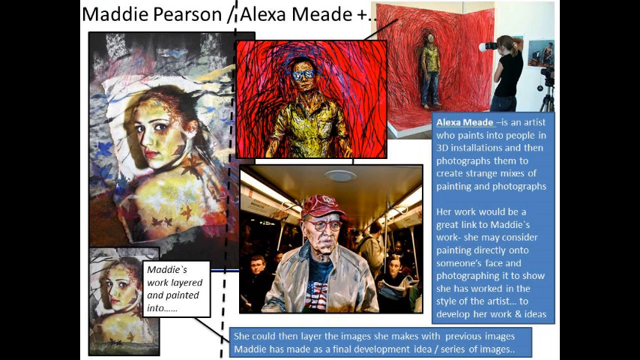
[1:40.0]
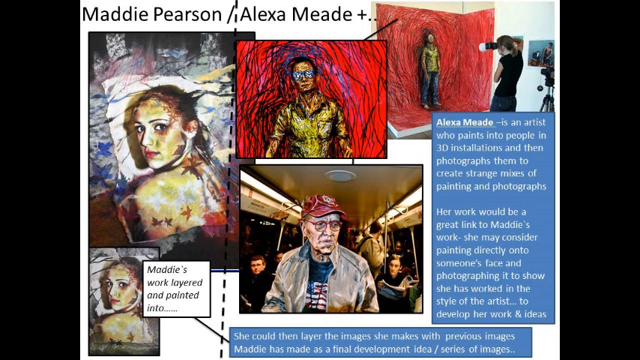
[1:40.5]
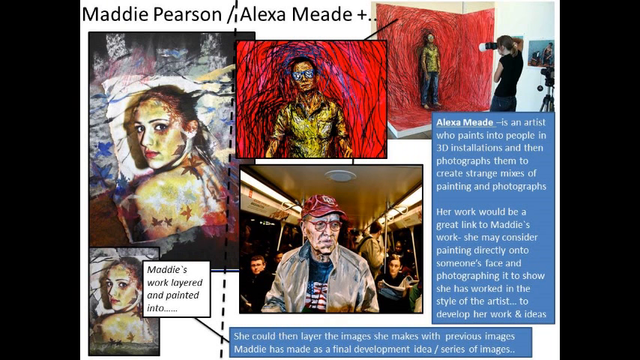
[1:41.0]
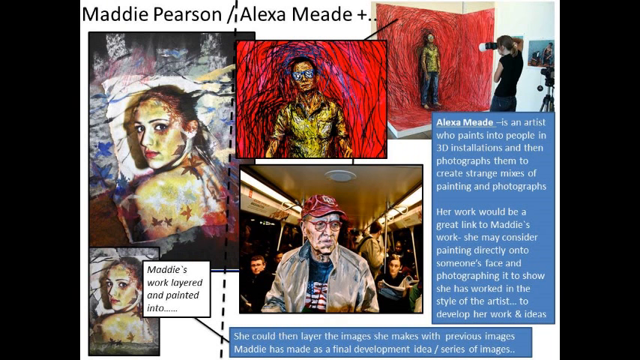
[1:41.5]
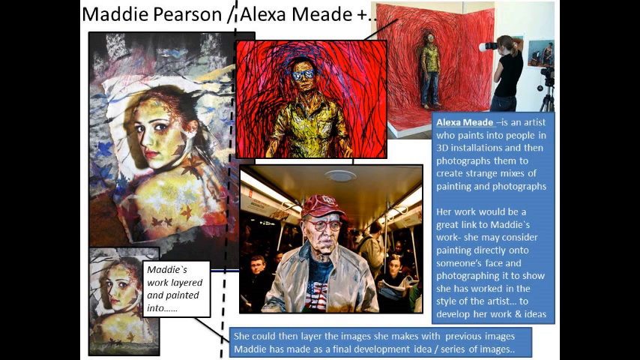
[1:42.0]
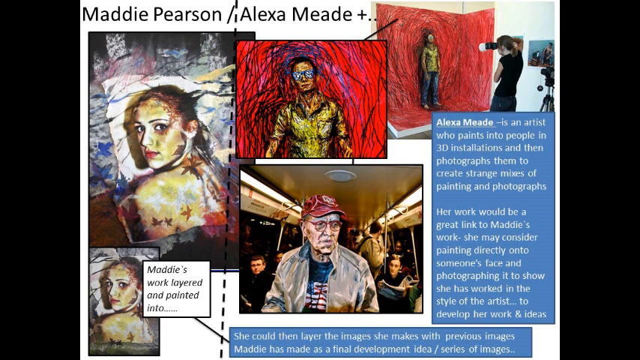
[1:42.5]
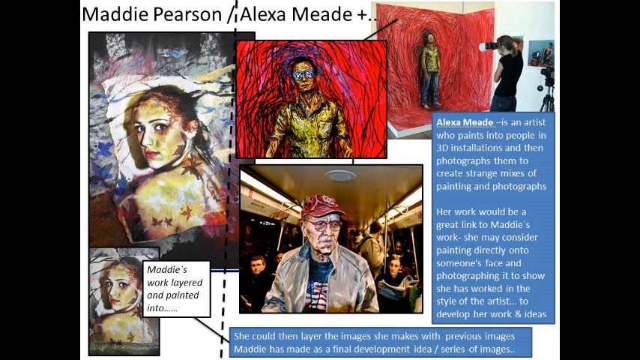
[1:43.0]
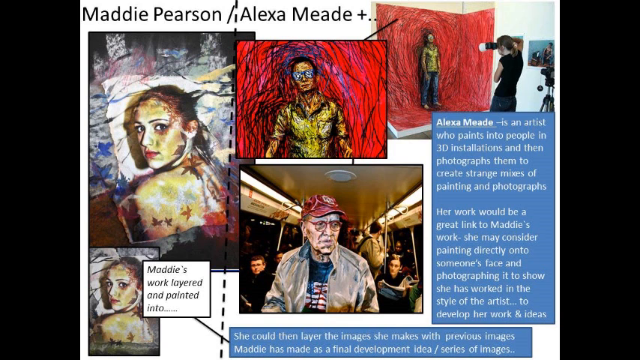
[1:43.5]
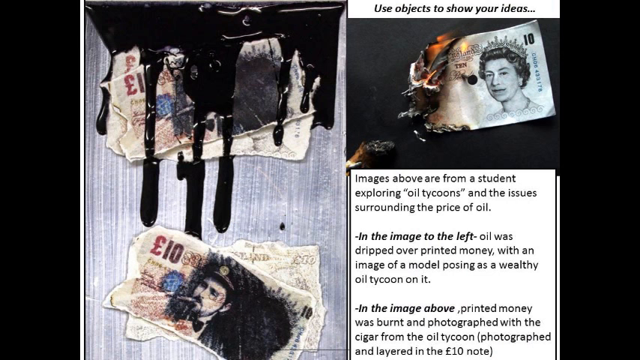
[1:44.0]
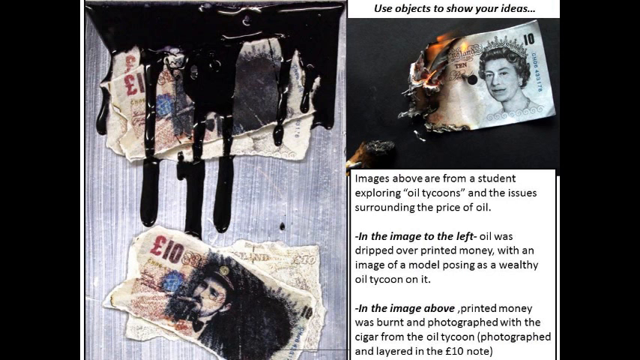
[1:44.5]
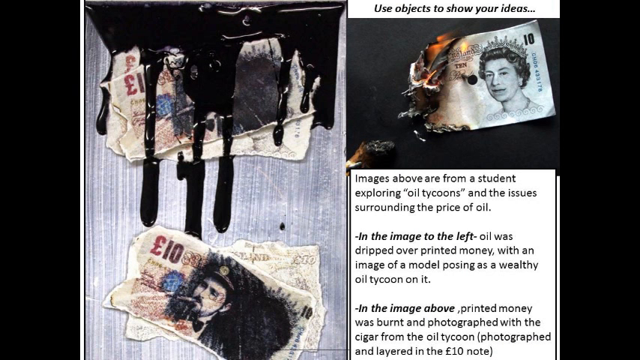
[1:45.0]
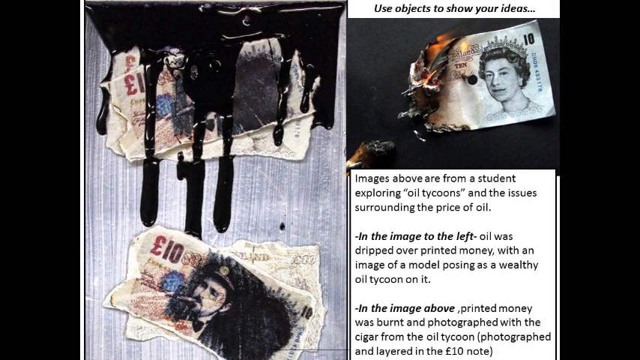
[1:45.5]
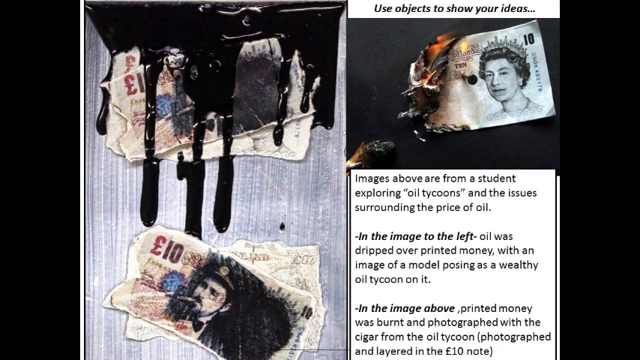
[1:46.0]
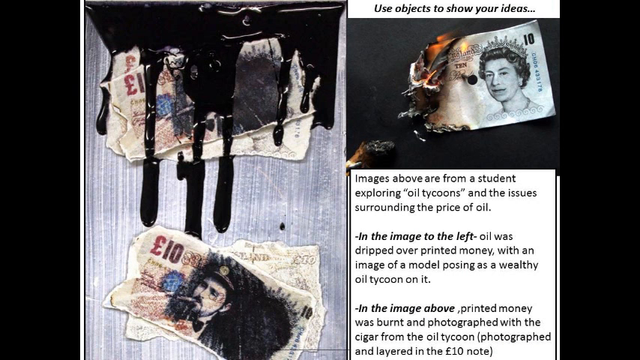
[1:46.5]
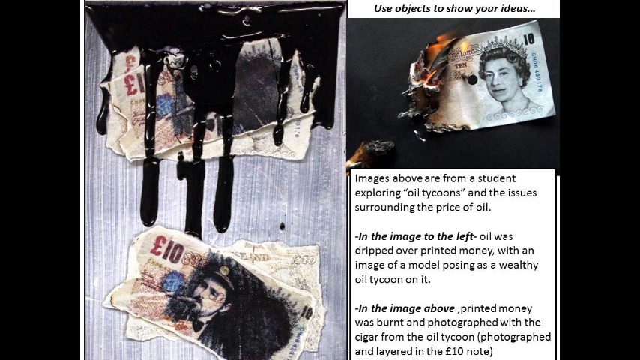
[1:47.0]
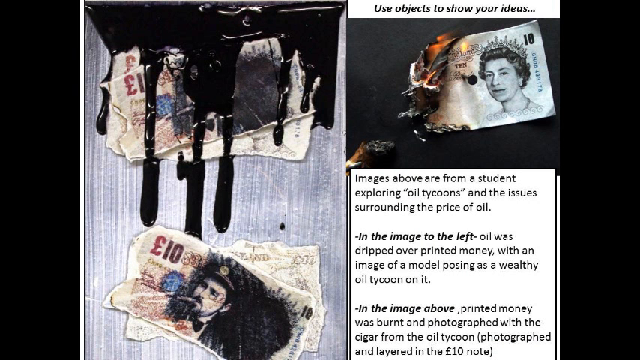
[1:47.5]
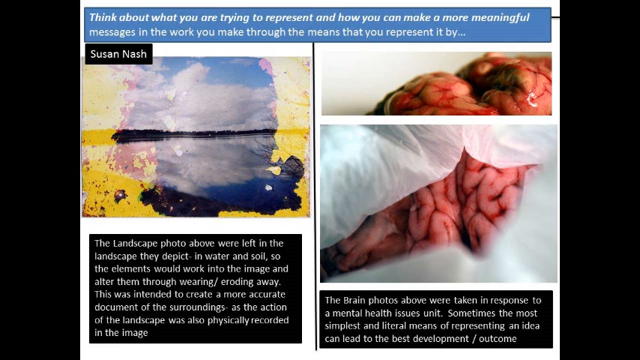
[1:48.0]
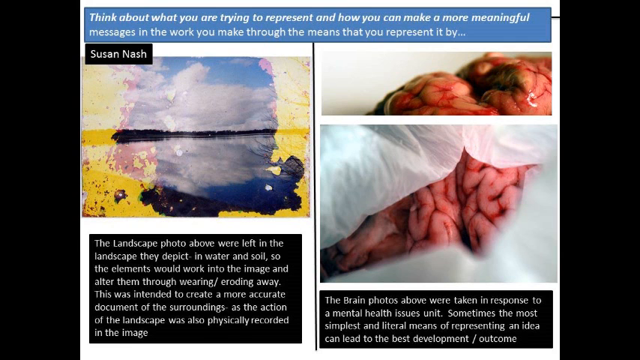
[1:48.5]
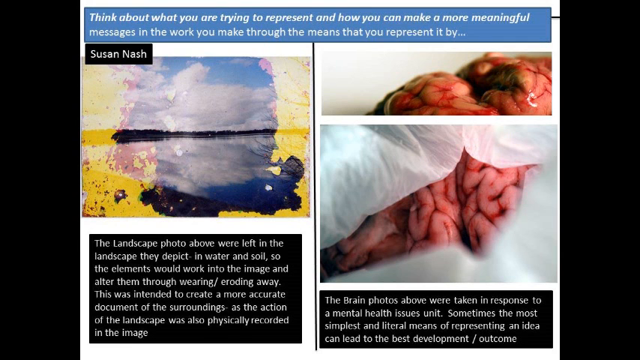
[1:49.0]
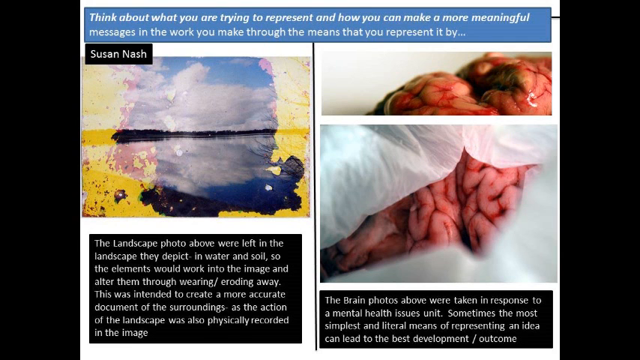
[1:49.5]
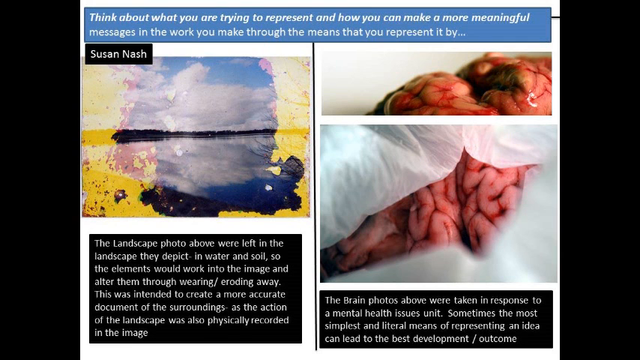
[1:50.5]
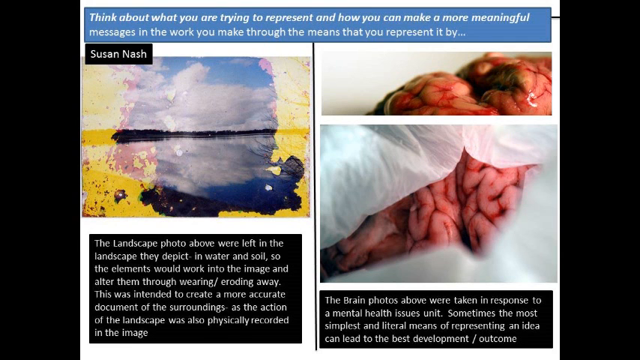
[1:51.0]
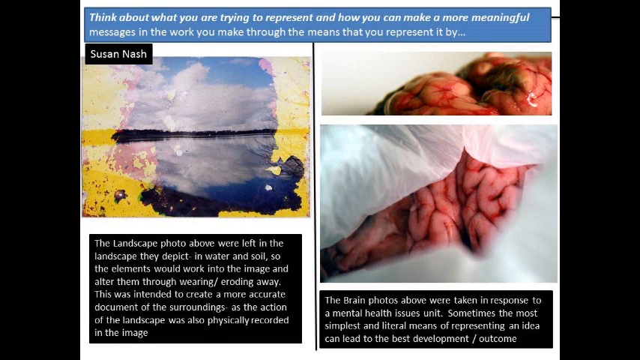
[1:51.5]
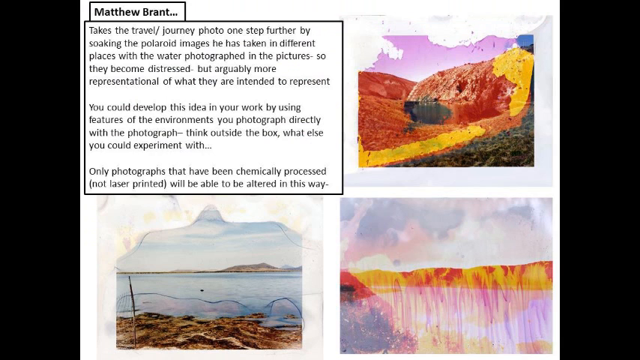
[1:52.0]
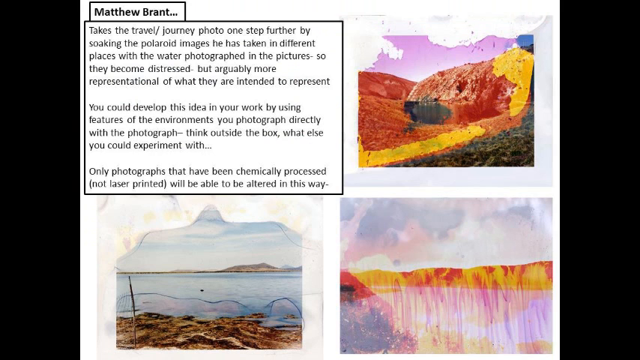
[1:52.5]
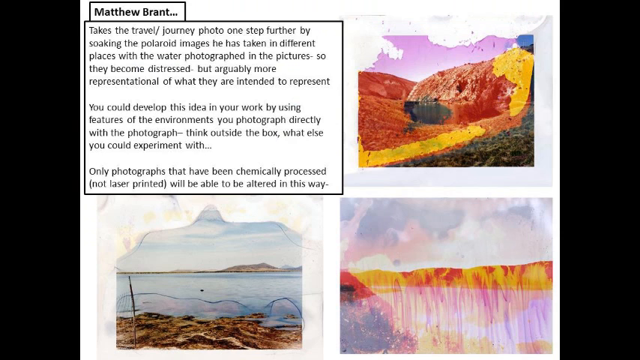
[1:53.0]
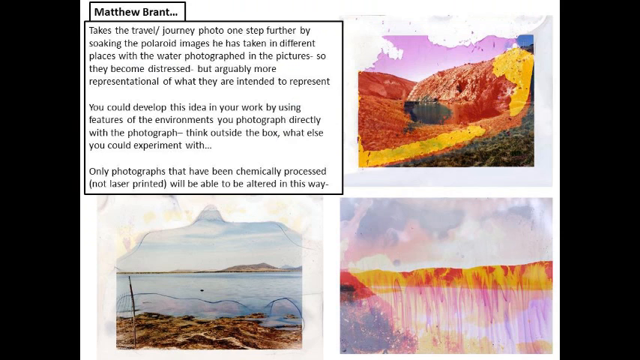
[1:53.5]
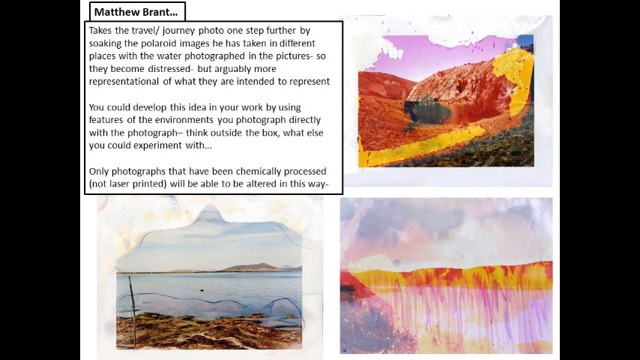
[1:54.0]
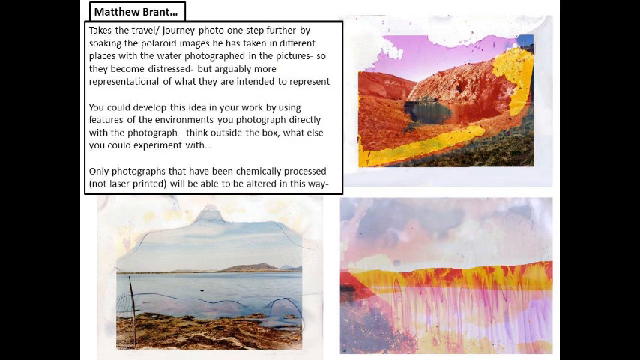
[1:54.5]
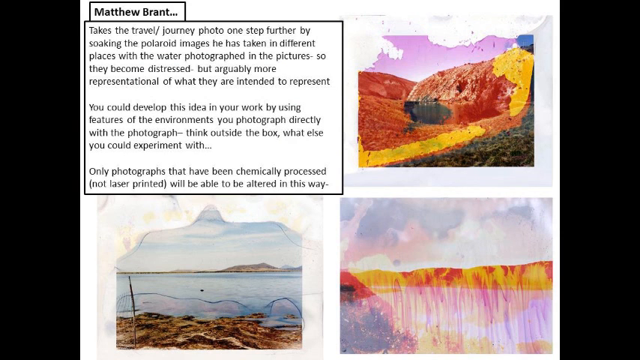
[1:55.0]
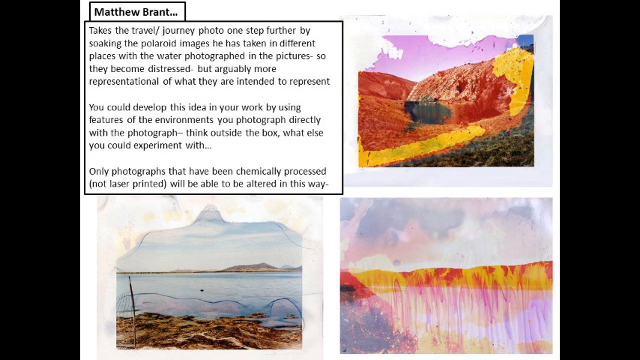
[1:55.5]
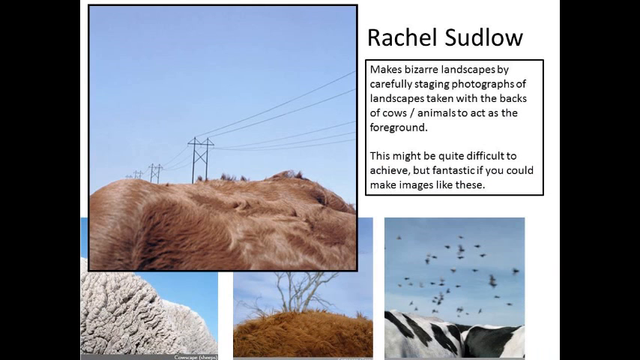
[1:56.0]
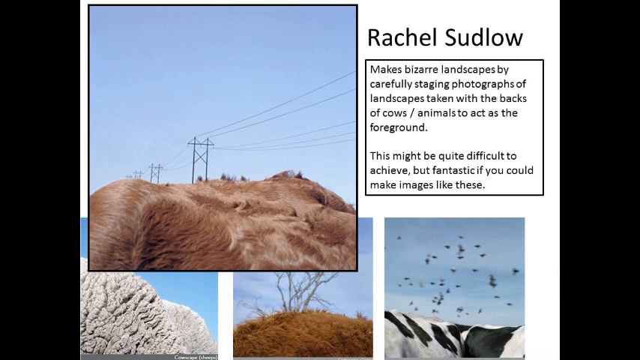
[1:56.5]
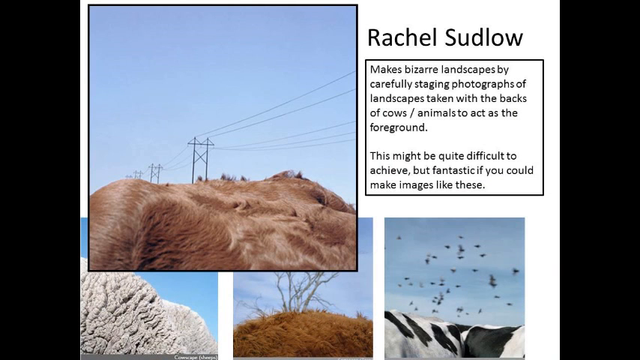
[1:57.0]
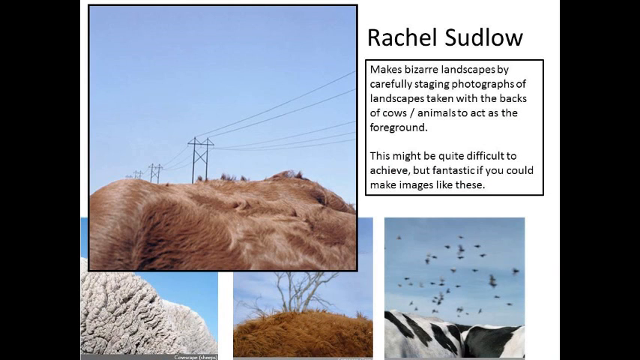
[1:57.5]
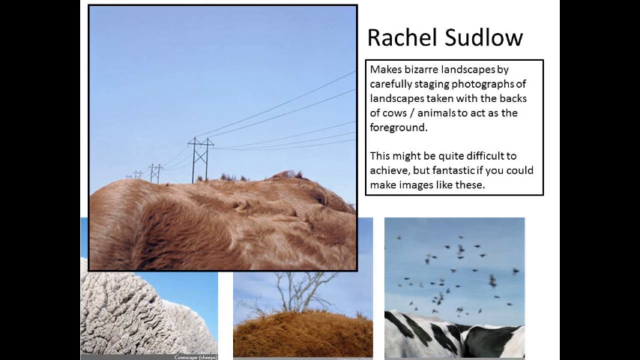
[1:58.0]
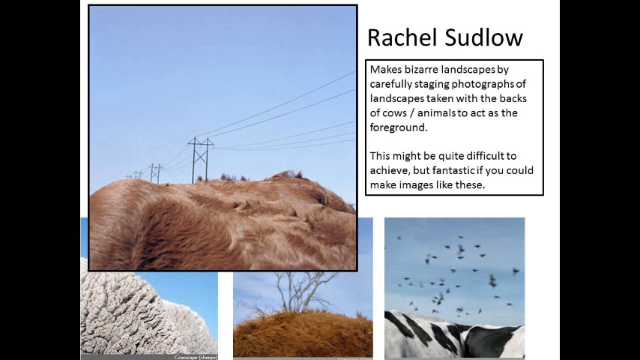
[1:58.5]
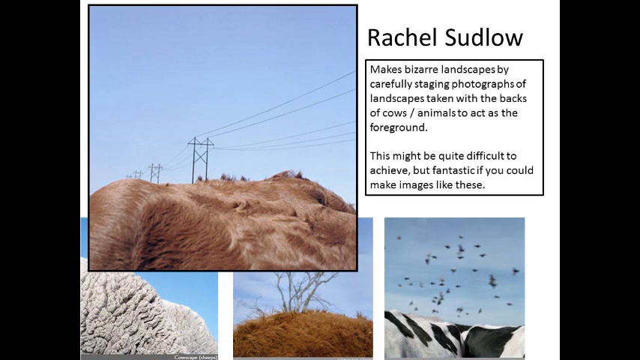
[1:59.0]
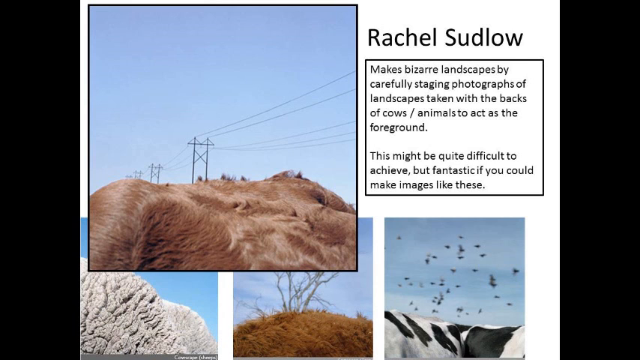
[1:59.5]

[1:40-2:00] The presentation shows a painted woman, painted men, a painted old man, another painted man, and a photographer taking a picture. A description in blue at the bottom right of the screen reads "Alexa Maida is an artist who paints into people in daily installations and then photographs them to create strange mixes of paintings and photographs." The next photo shows British pound notes with a young version of Queen Victoria. The next shows a brain, and at the top it says "think about what you are trying to represent and how you can make it a more meaningful message in the world". Another is a photograph by Susan Marsh. The next photo is from Matthew Brandt and looks like a volcano; its description begins "take the travel or journey photo one step better" and includes "think outside the box". The next photograph shows what looks like the skin of an animal, by Rechen Sadu, whose description says he "makes bizarre landscapes by carefully staging photographs".